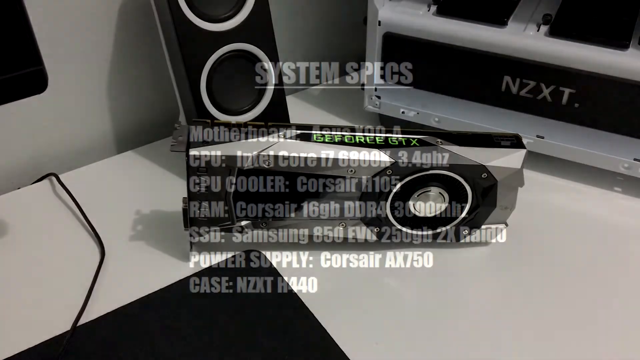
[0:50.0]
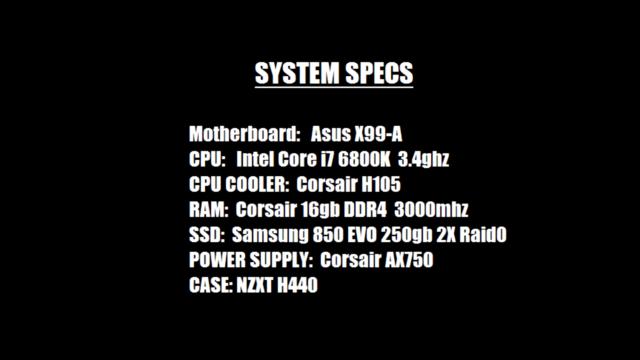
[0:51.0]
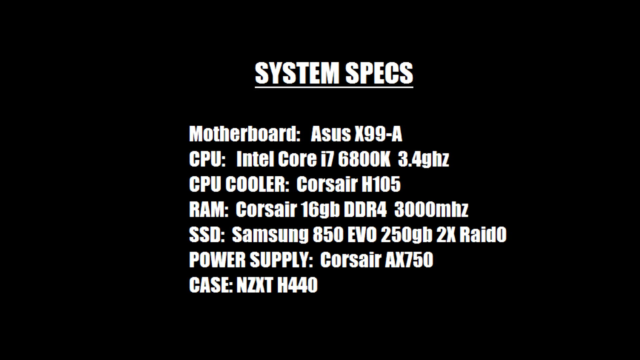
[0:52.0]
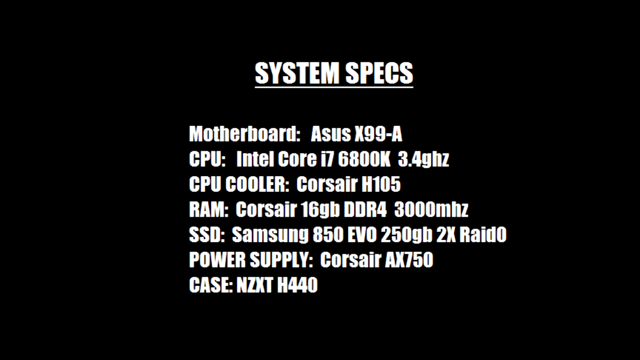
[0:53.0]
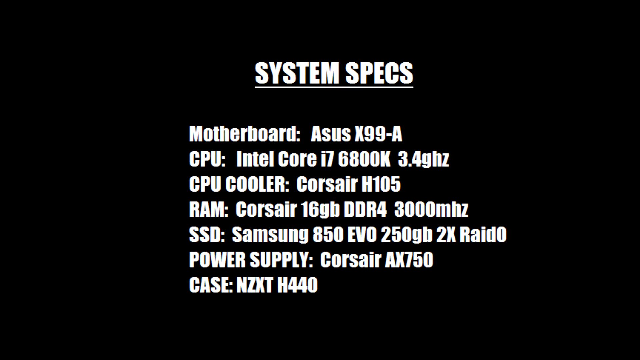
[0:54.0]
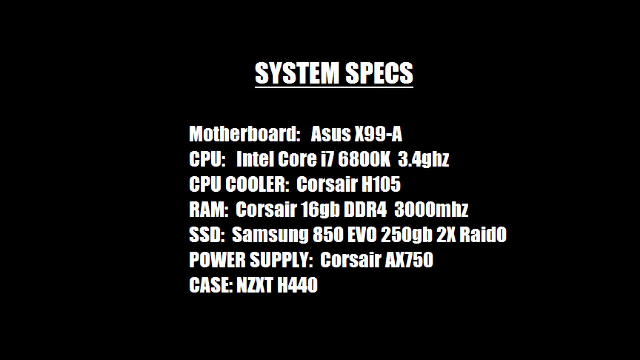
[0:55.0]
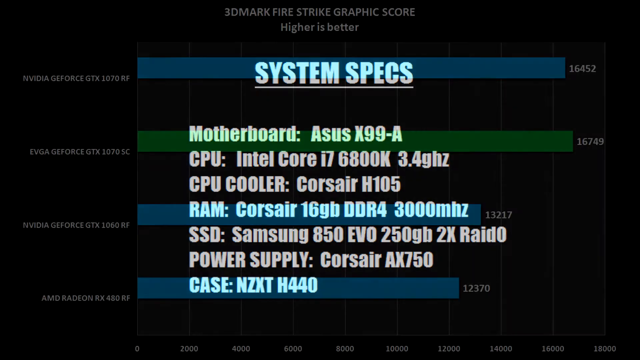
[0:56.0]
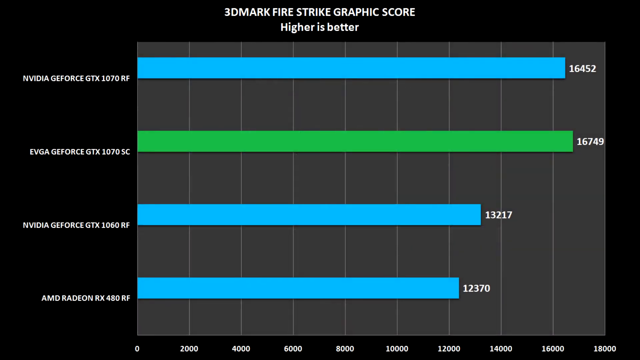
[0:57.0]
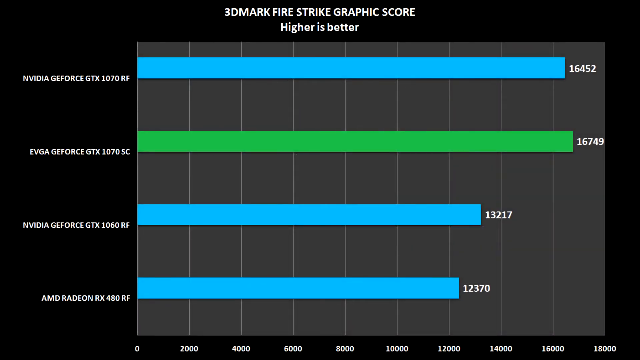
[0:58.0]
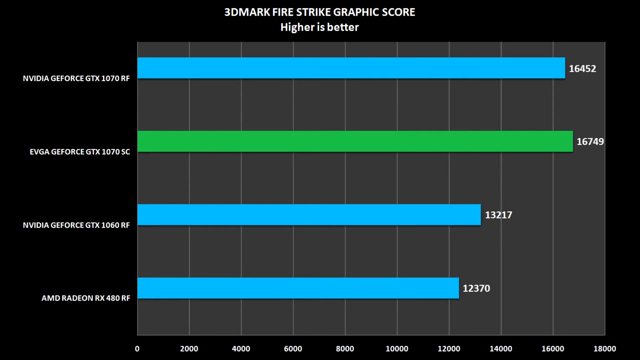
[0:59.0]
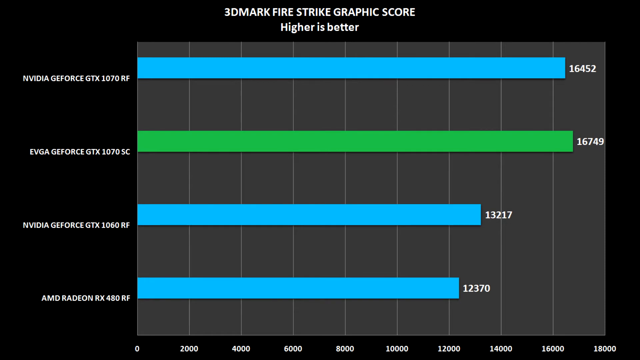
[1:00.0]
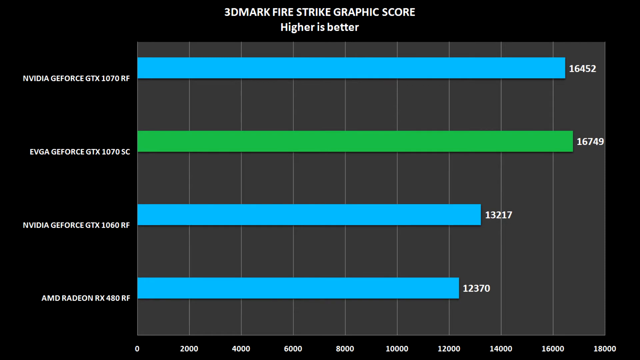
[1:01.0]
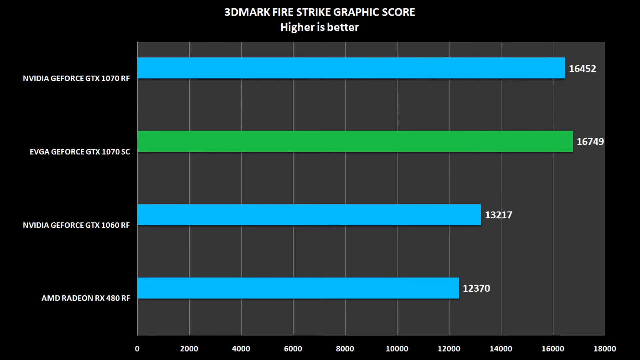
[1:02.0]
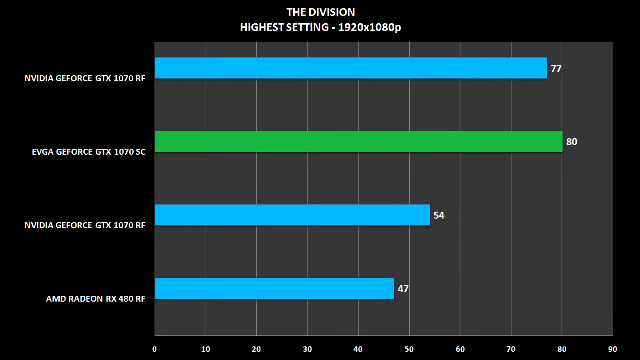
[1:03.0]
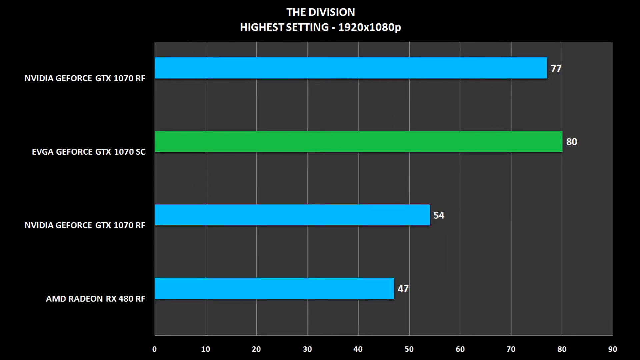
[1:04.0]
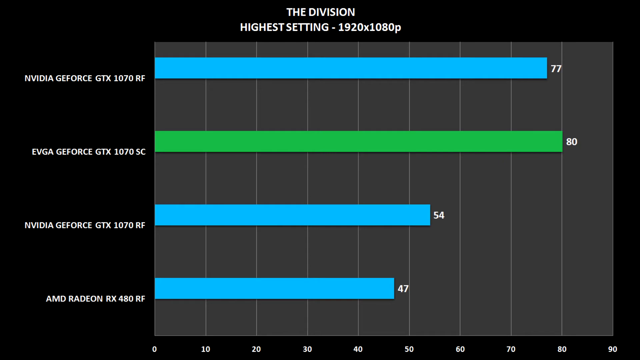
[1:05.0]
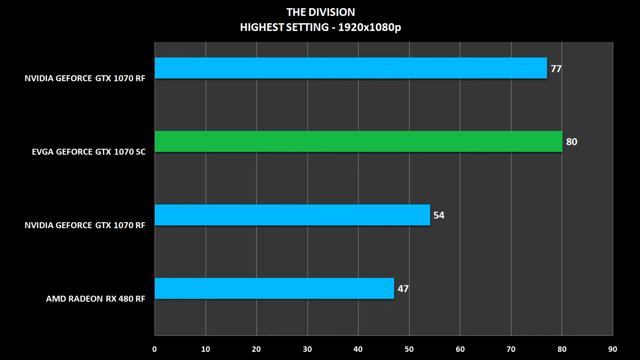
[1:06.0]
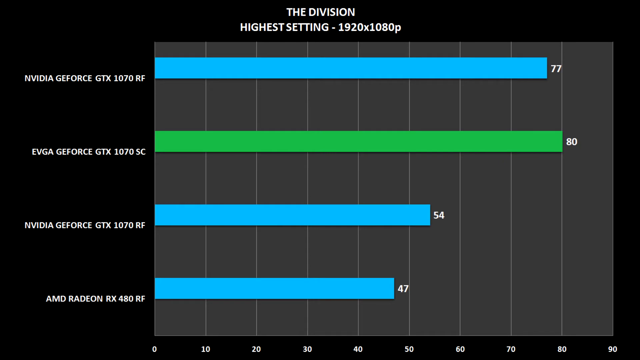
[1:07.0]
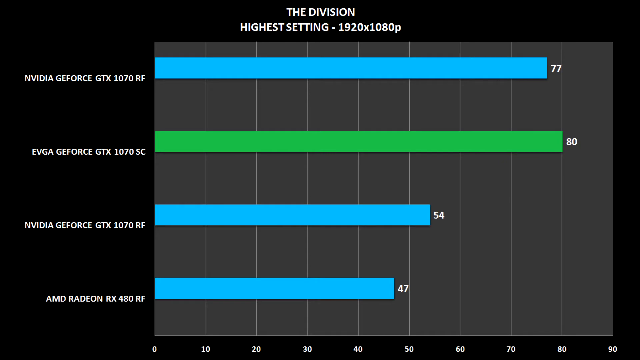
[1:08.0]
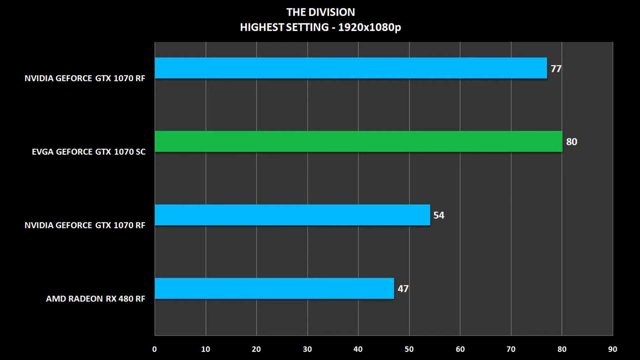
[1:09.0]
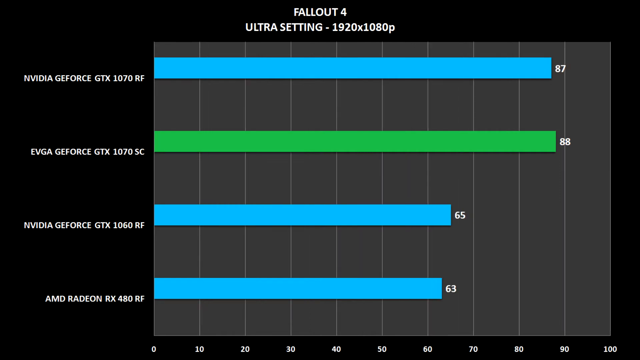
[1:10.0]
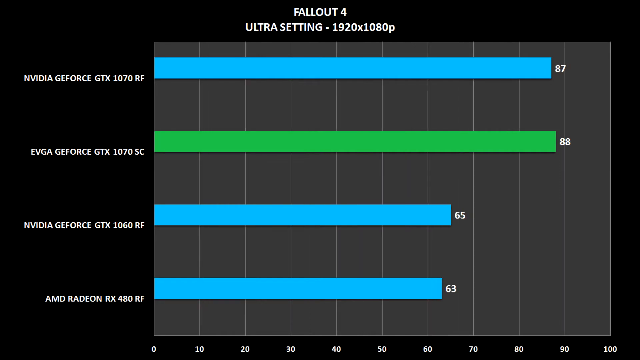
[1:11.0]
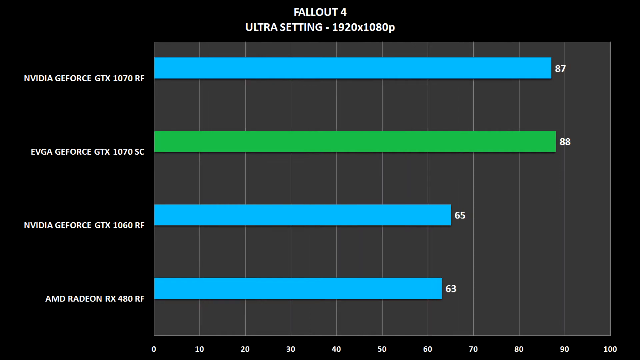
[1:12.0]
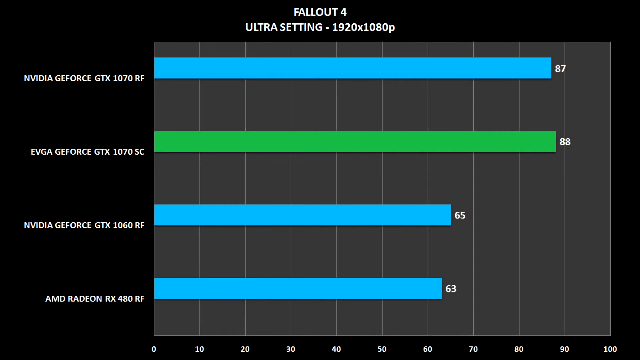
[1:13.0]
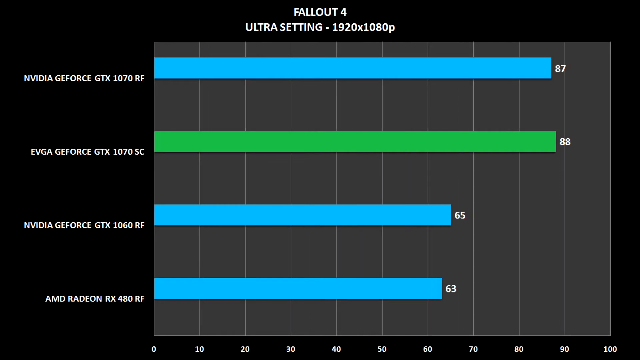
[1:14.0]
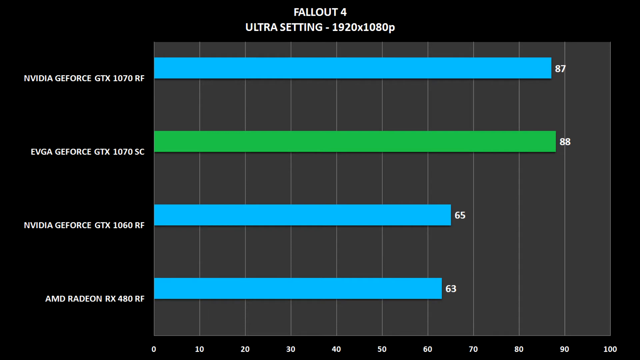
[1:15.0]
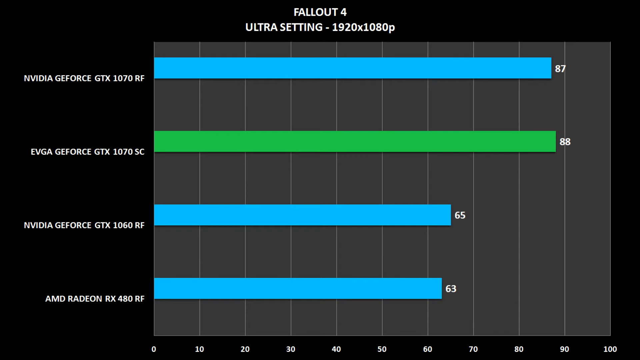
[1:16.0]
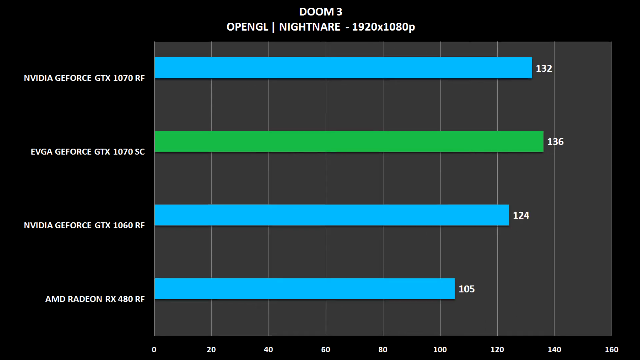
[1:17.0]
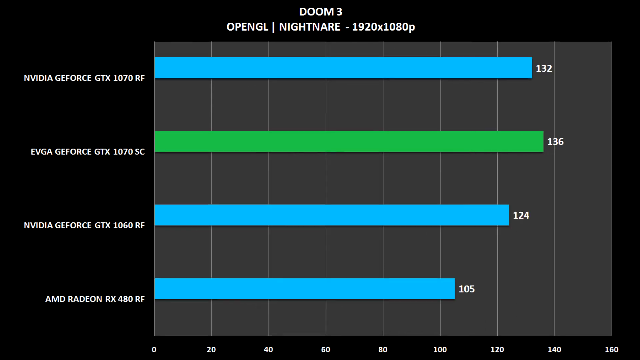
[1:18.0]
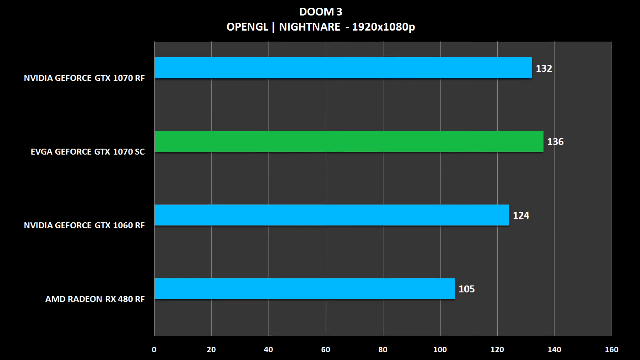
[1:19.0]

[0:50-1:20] The GeForce GTX video card is shown, followed by a screen of system specs for the entire desktop: motherboard ASUX X99A; CPU Intel Core i7-6800K, 3.4 GHz; CPU cooler Corsair H105; RAM Corsair 16GB DDR4-3000MHZ; SSD Samsung 850 Evo, 250GB, 2x RAID 0; power supply Corsair AX750; case NZXT H440. The next screen shows the 3DMark Fire Strike graph score, with "higher is better" written underneath and the graph score in the center of the screen.